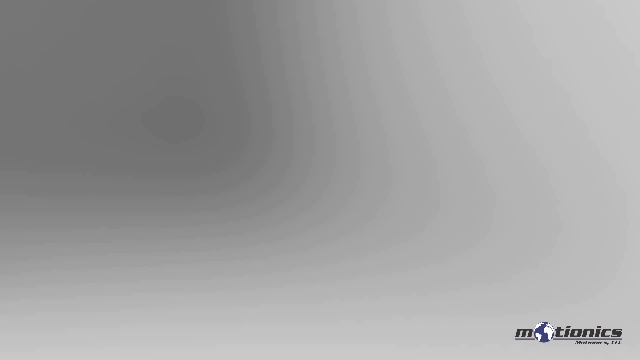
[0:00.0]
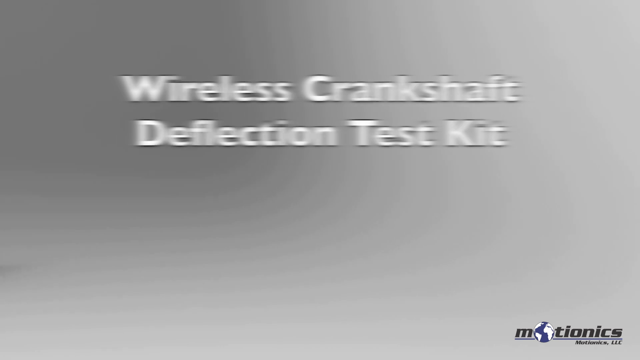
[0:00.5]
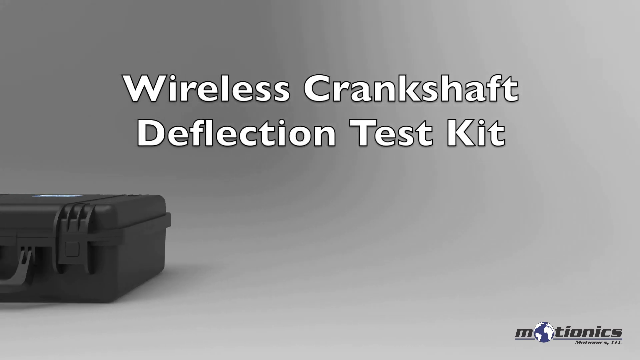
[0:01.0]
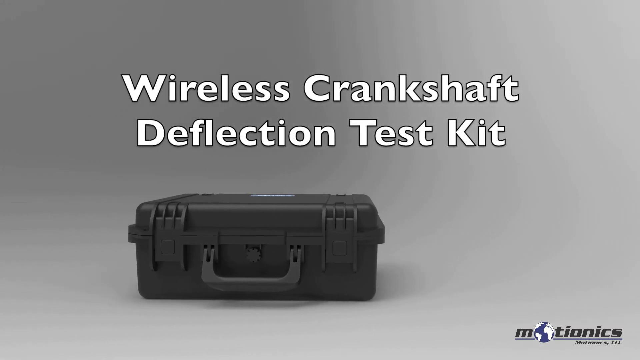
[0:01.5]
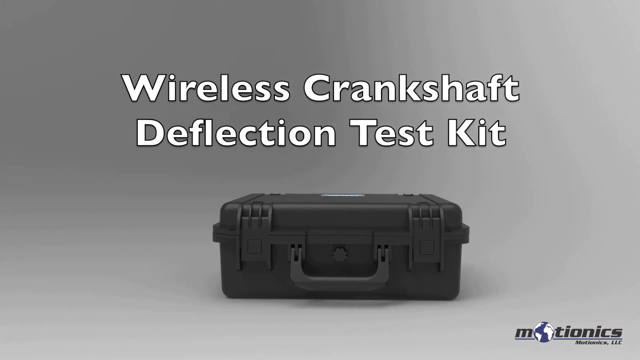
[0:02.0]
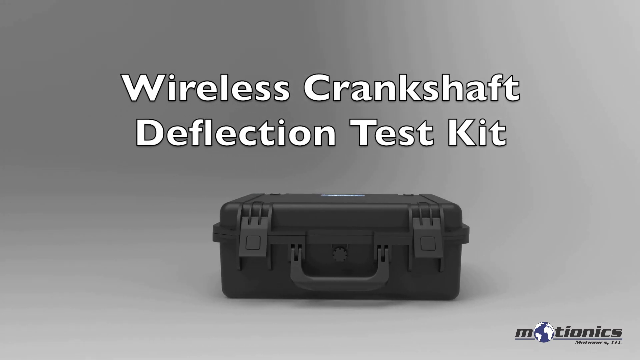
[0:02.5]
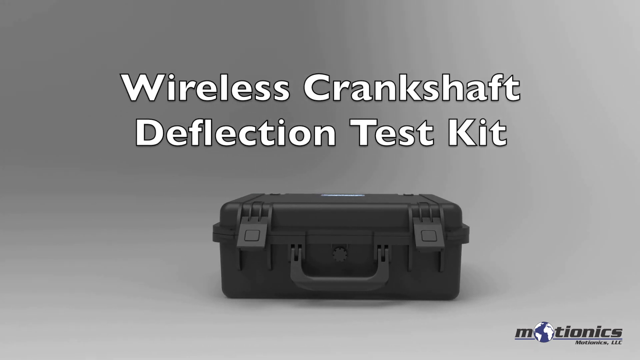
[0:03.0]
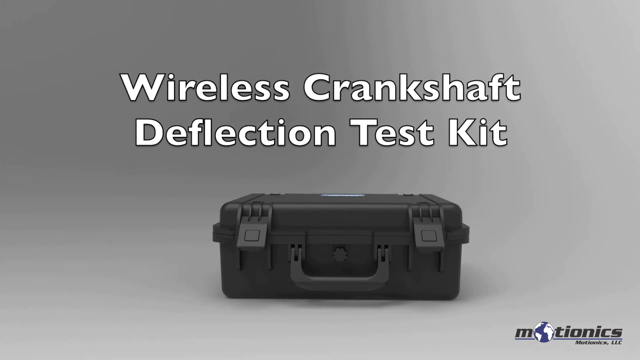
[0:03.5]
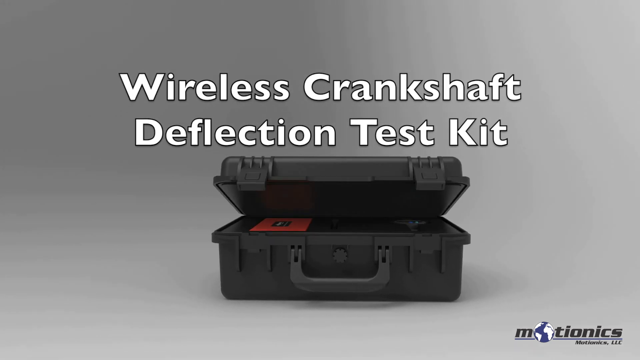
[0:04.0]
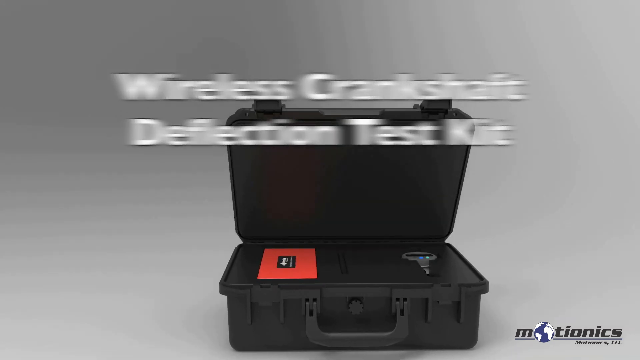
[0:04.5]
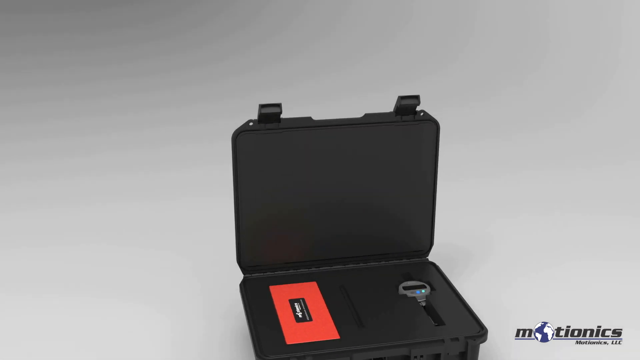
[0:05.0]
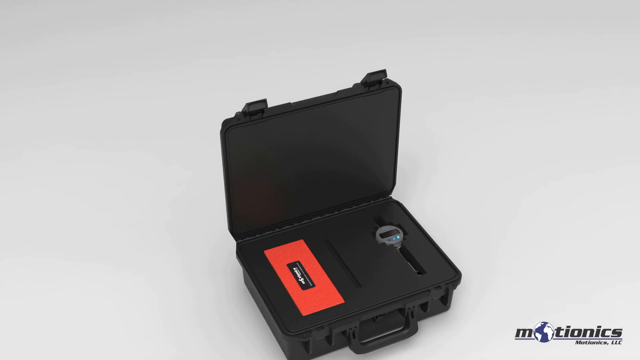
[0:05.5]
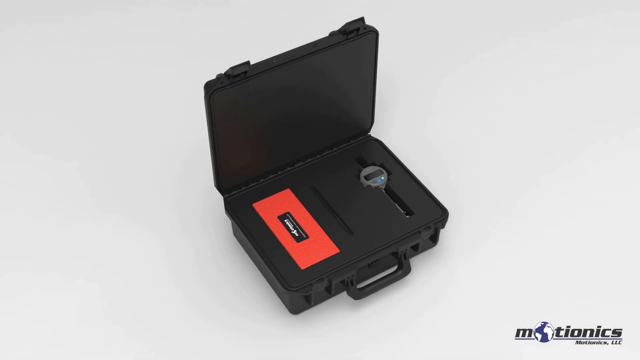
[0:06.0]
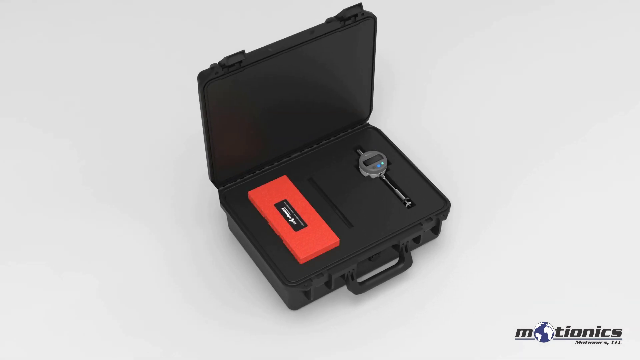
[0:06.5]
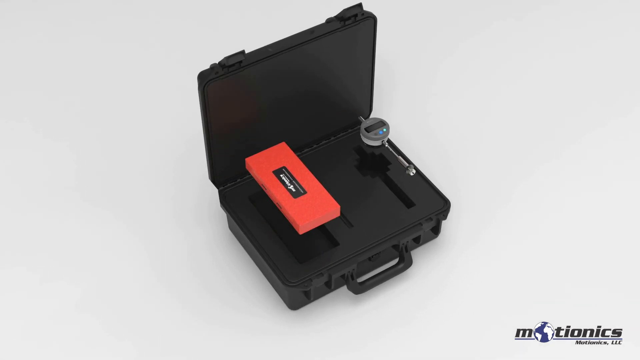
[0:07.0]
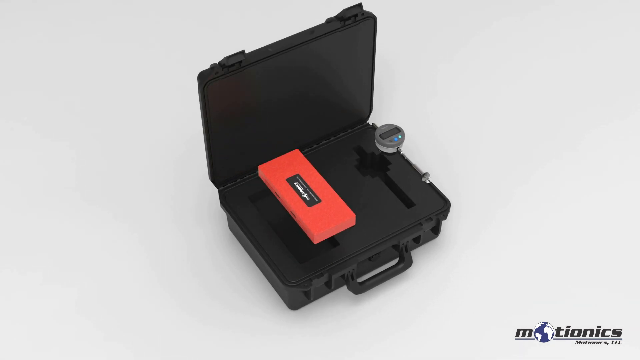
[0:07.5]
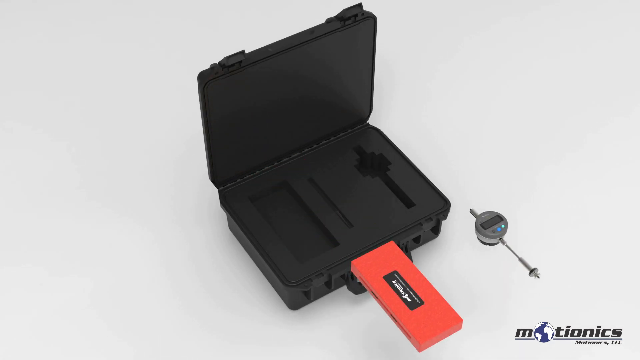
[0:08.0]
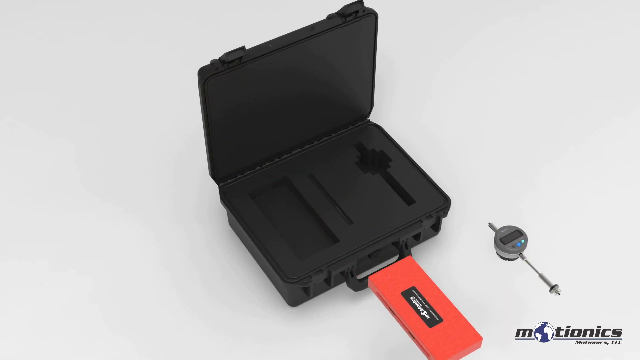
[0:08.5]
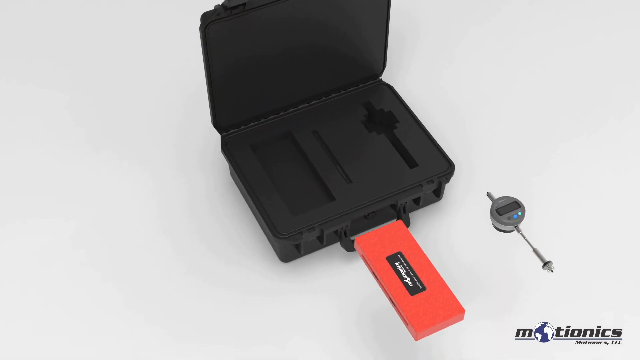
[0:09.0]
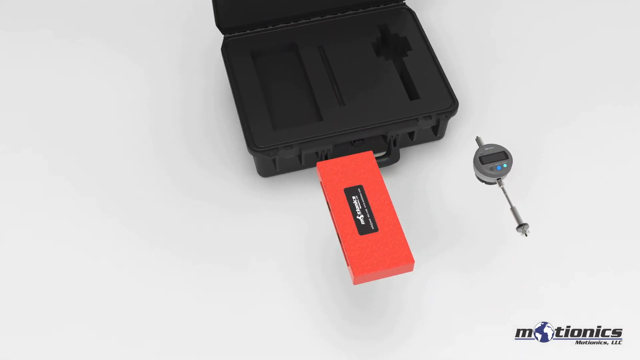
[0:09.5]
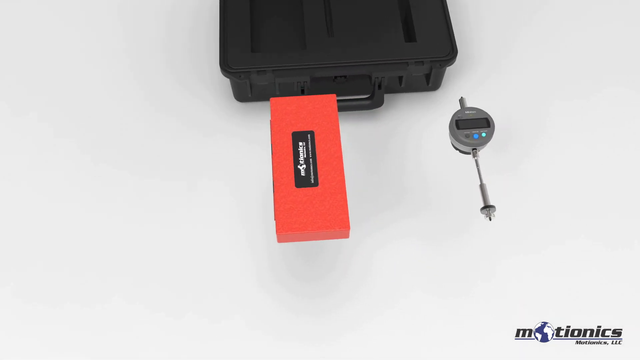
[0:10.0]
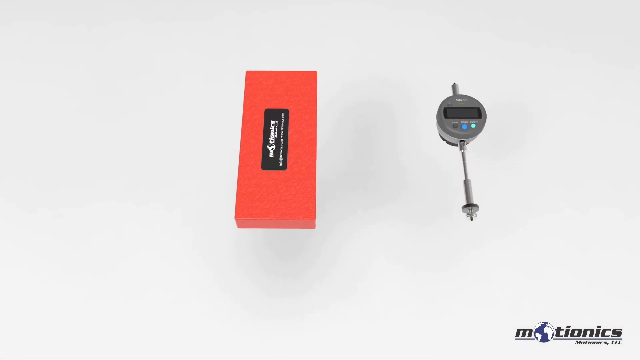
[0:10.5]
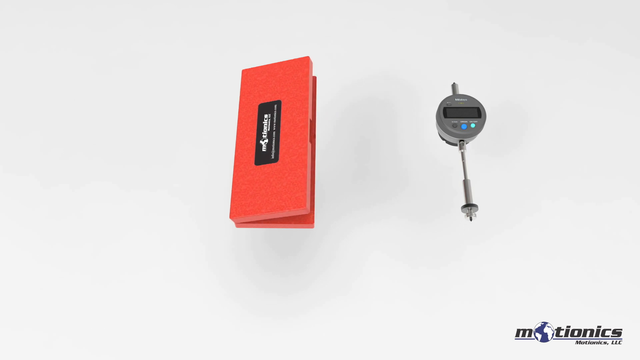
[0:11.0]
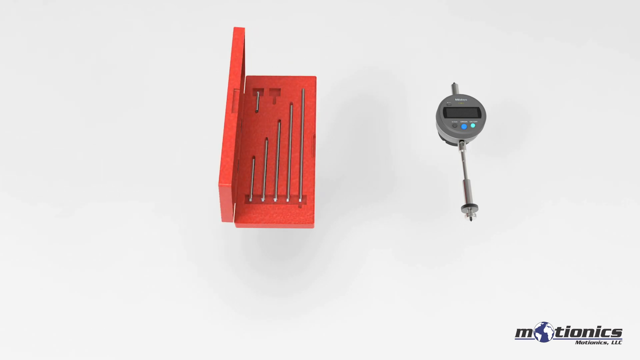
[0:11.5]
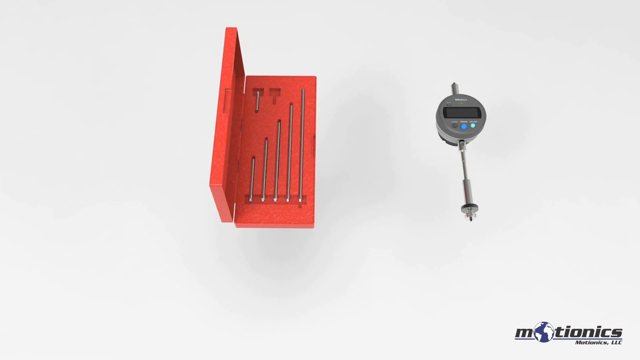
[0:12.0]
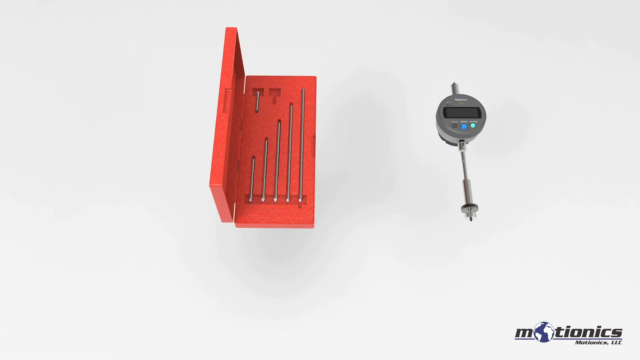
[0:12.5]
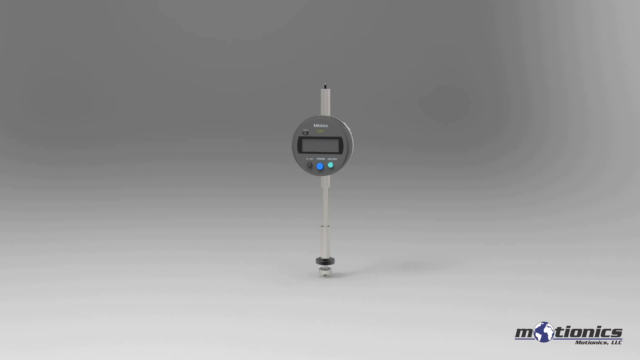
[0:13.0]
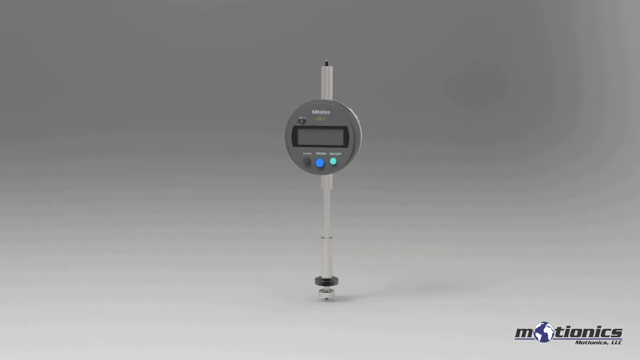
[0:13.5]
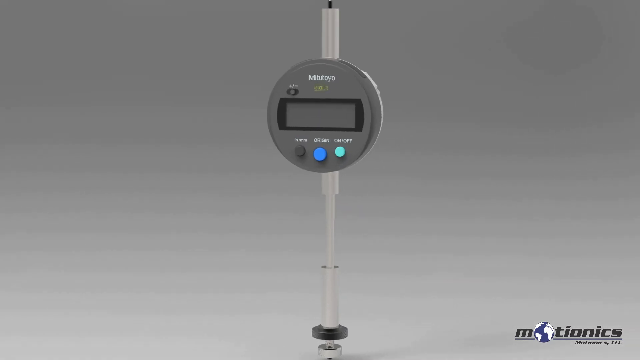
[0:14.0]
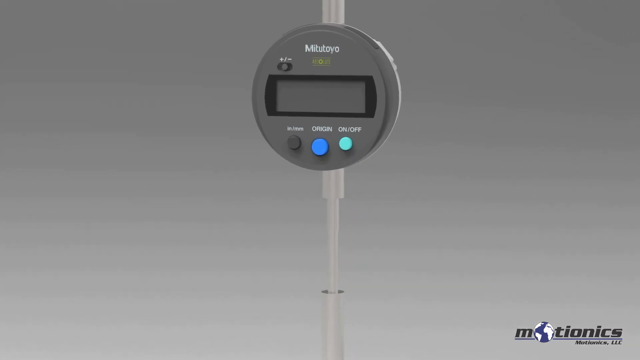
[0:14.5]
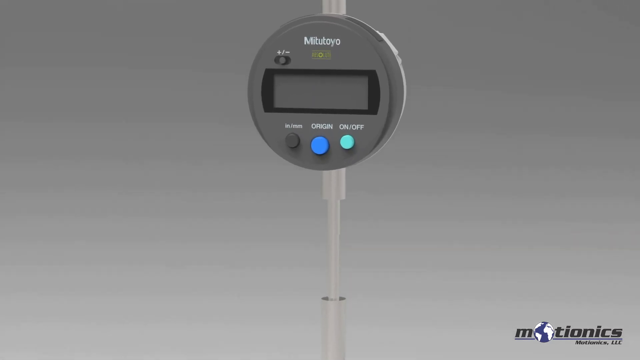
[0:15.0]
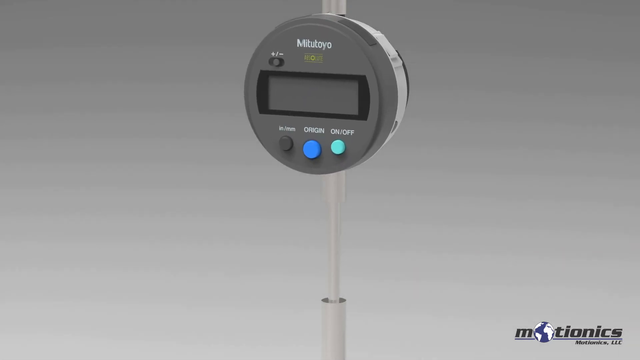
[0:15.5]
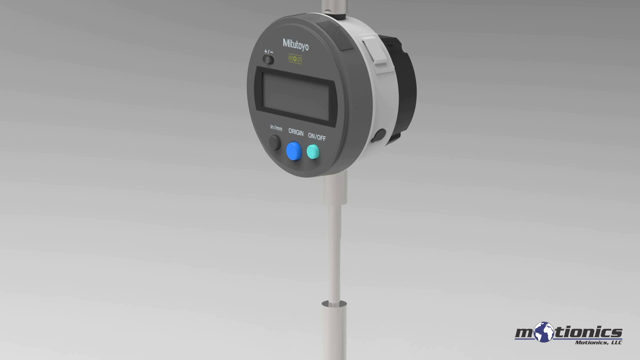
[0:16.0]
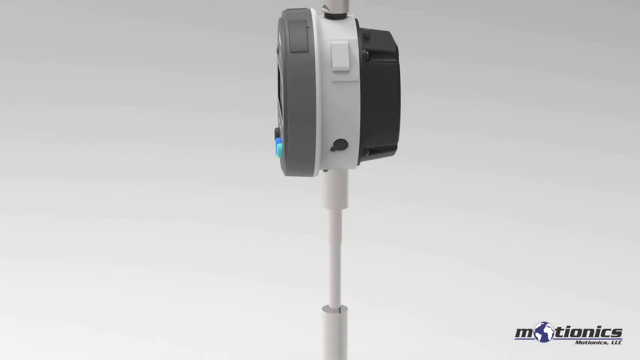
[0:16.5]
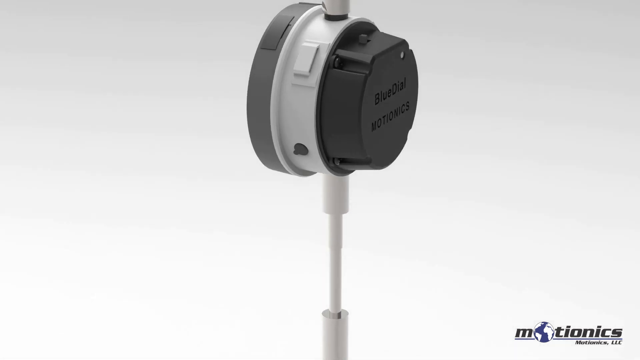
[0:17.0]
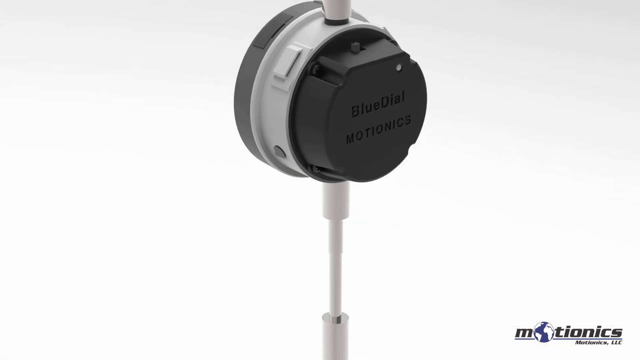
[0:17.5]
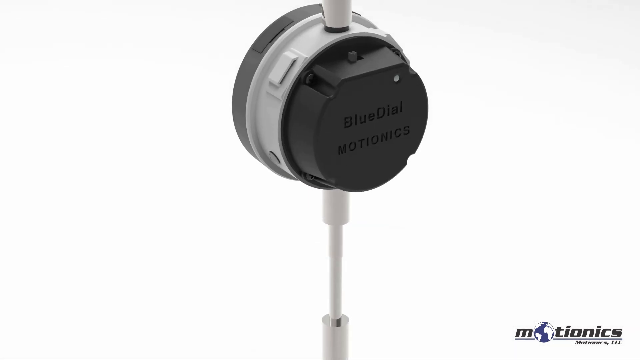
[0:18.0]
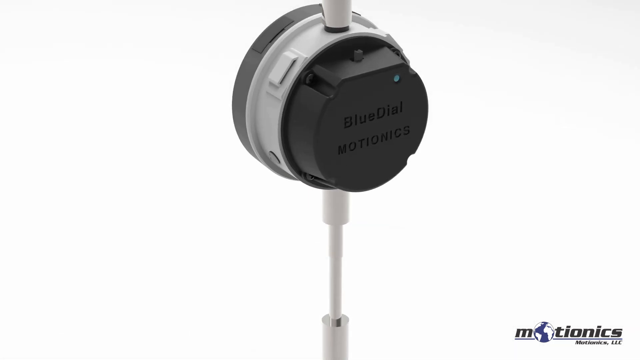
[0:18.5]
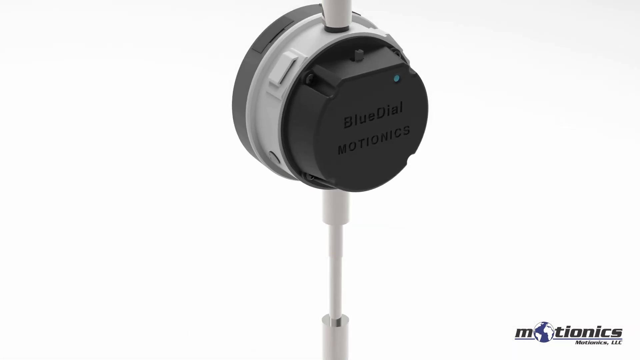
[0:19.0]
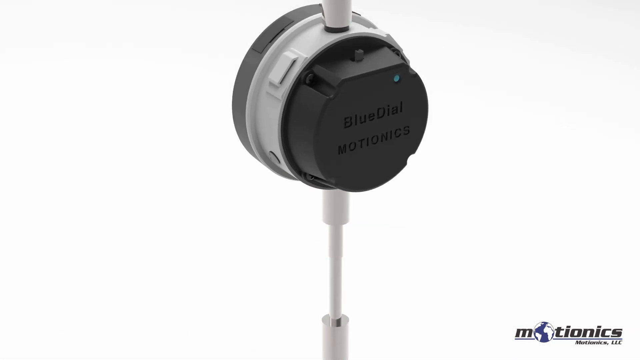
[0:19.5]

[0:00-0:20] The video begins with a gray screen on which the words "Wireless Crankshaft Deflection Test Kit" appear in white. From the left side of the screen, toward the bottom, a black plastic box with a handle and clips slides in and stops at the center of the screen. The two clips on each side begin lifting without anyone touching them until they are straight out, and then the cover of the box lifts up as the words disappear. The camera goes to a top-angle view of the open box, now with its right side higher than the left. There are two things in the box: a round electronic device with what looks like a long screw attached through the top and coming down at the bottom, and, on the left side, a rectangular red-orange box with a black sticker with white writing on it. Both lift straight up out of the box, revealing indents inside where they were seated, then slide directly away from the box until they stop in front of it. The camera goes to a straight view and the box itself slides off the top of the screen. The rectangular box opens from the right side until its cover is straight up; inside appear to be drill bits, five at the bottom increasing in size from right to left, and on top a small one with an empty indent next to it. A shot of the electronic device follows, zooming in on its round part. It is gray and has three buttons at the bottom: a gray one, a bigger blue one labeled "origin", and a smaller teal one labeled "on off". On top it says "Mitutoyo", and there is a rectangular screen on the device. The device begins spinning from right to left, showing a white middle part and a smaller black part that sticks out in the back. As it turns to the back, it reads "Blue Dial Motionics", and there is a button at the top.